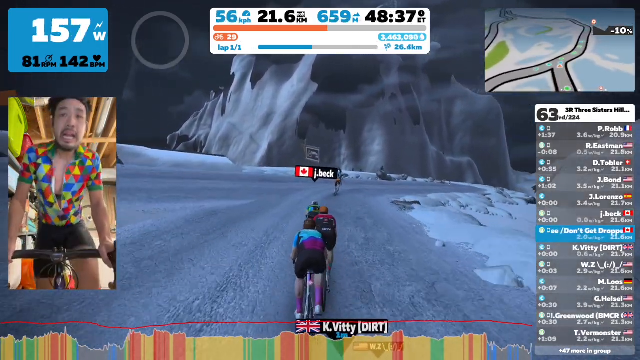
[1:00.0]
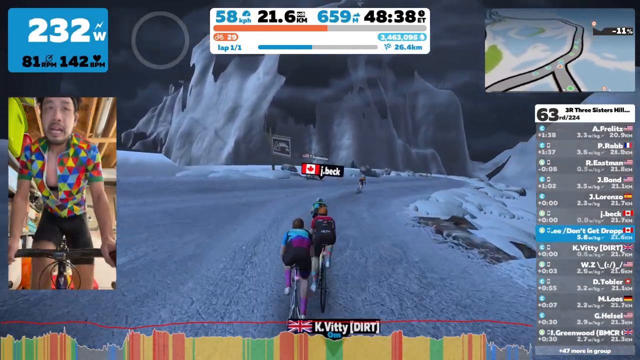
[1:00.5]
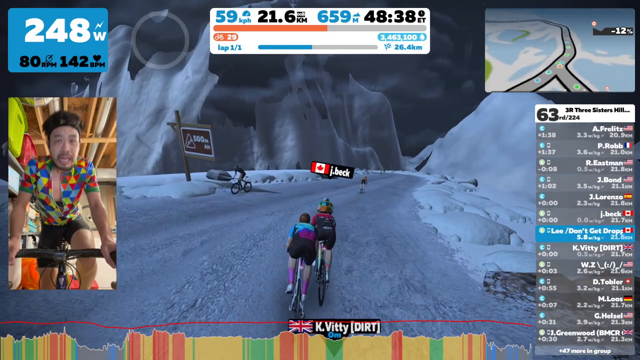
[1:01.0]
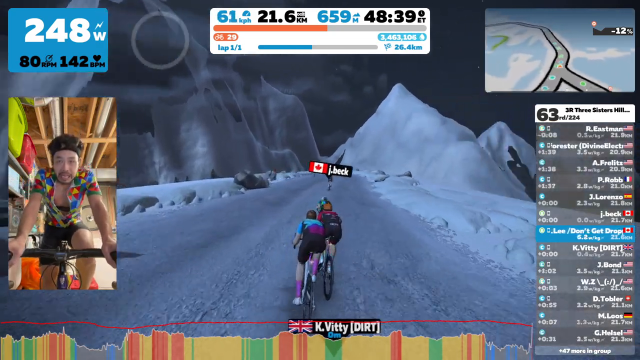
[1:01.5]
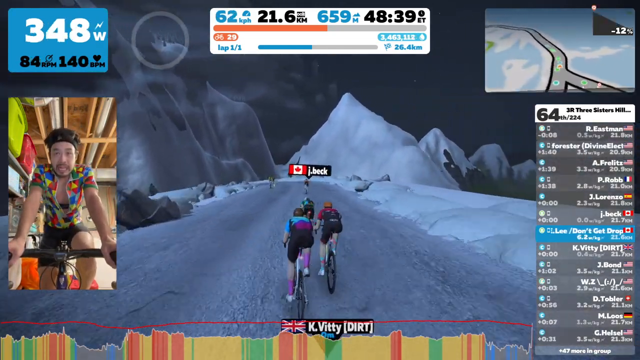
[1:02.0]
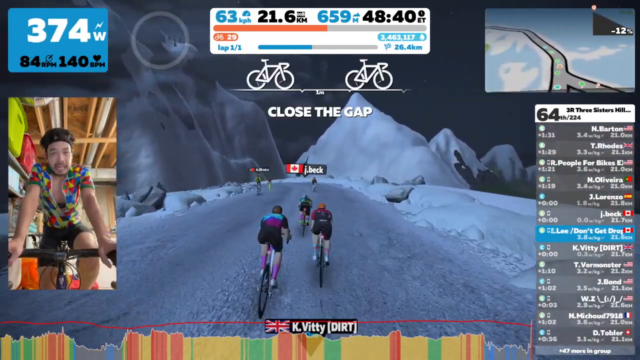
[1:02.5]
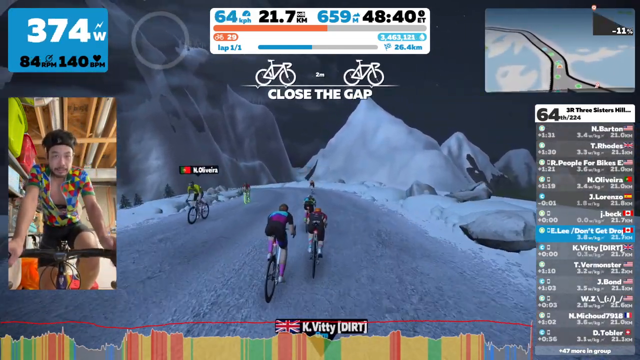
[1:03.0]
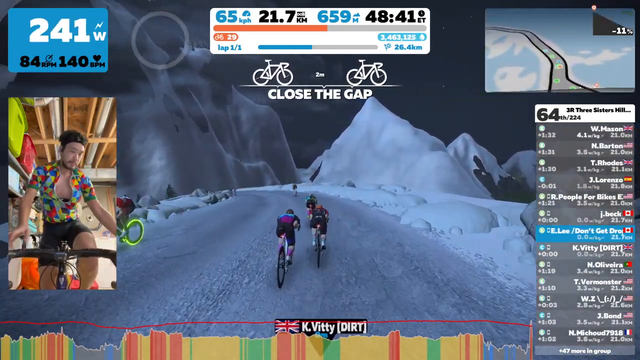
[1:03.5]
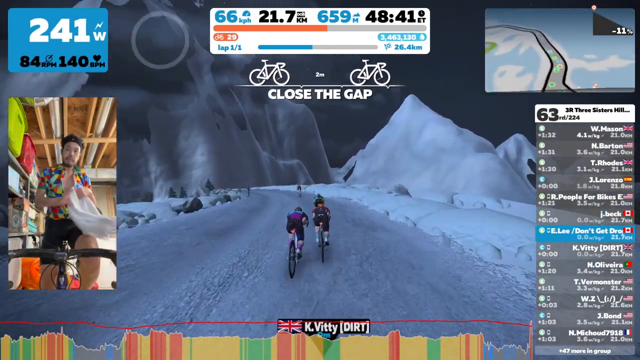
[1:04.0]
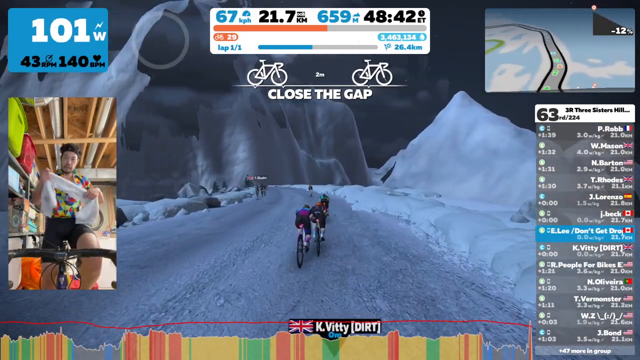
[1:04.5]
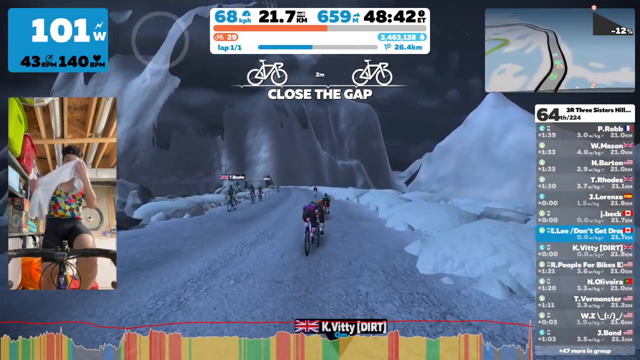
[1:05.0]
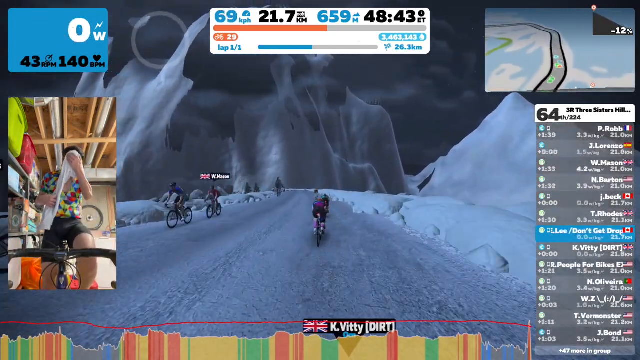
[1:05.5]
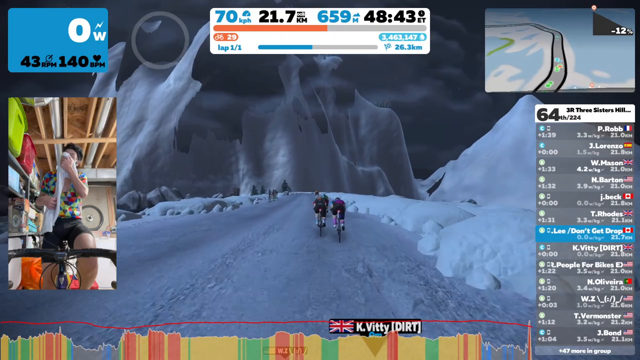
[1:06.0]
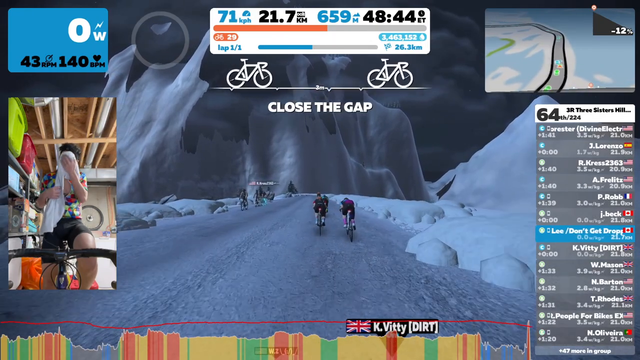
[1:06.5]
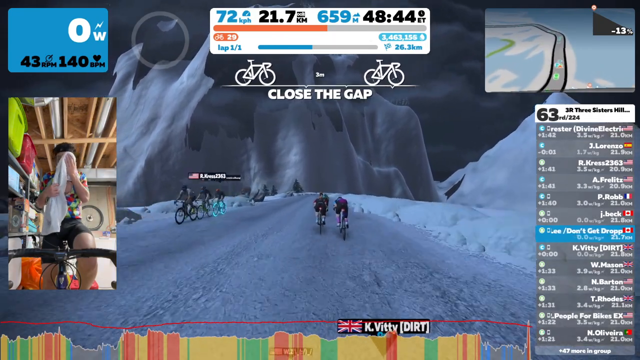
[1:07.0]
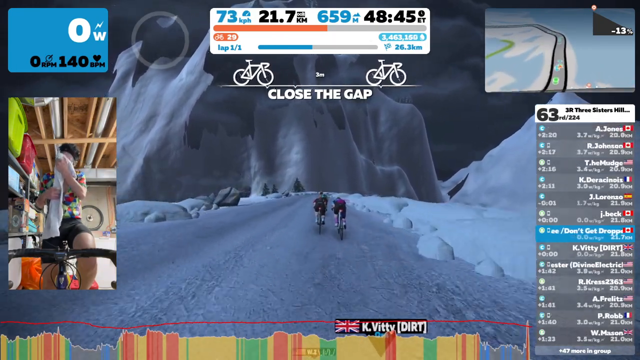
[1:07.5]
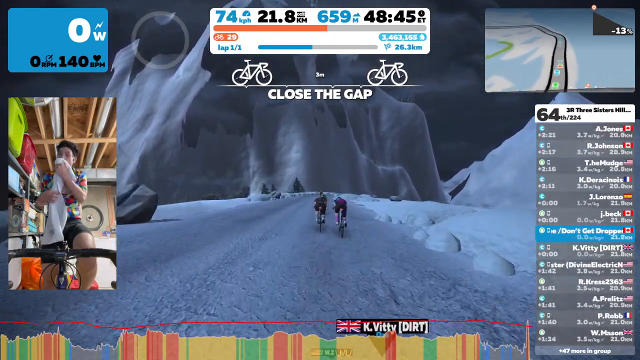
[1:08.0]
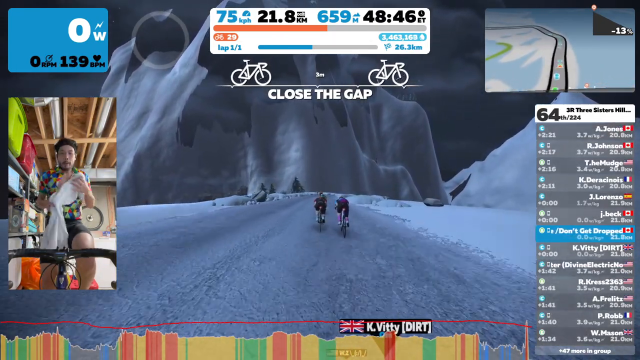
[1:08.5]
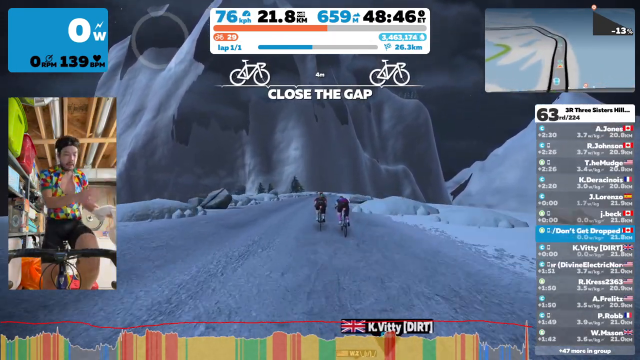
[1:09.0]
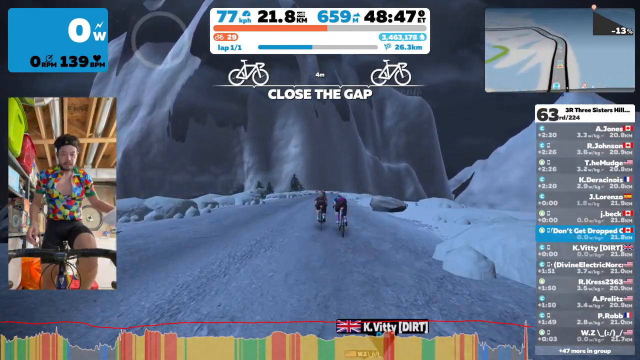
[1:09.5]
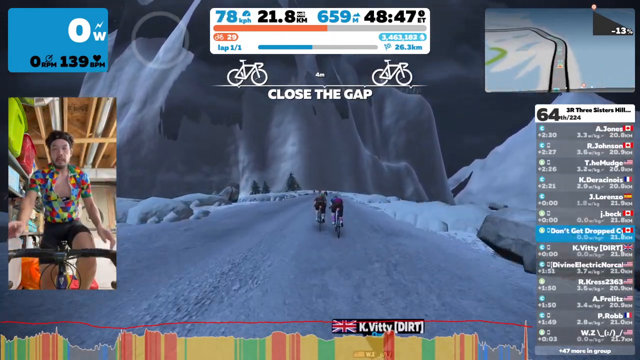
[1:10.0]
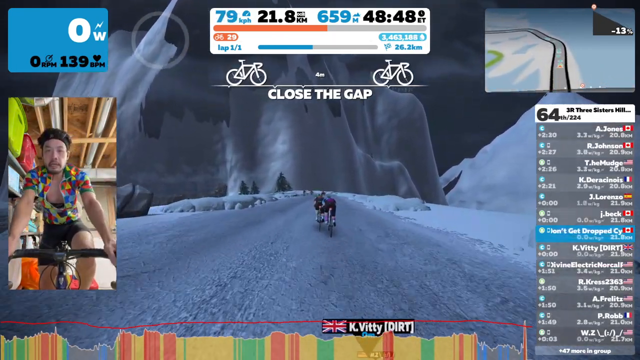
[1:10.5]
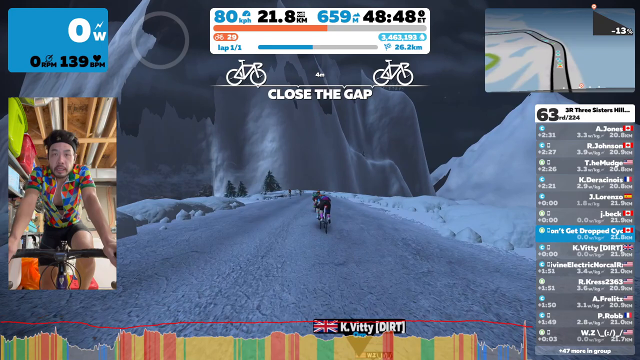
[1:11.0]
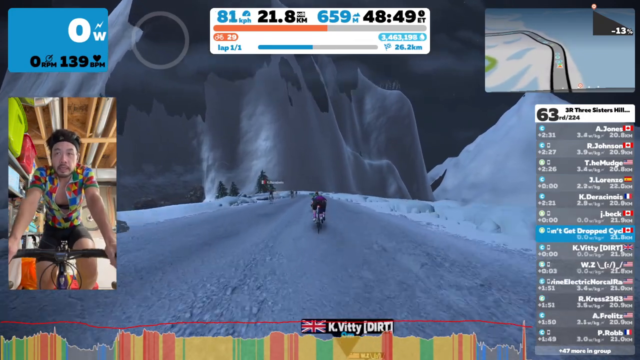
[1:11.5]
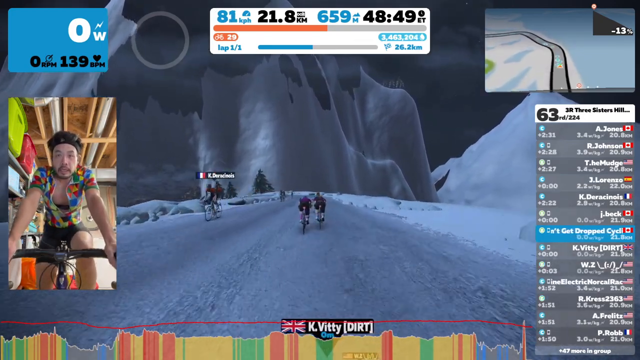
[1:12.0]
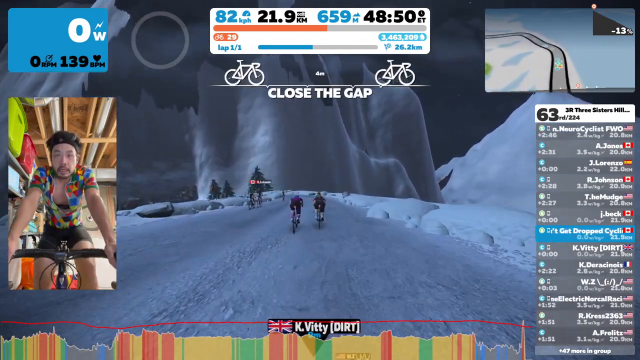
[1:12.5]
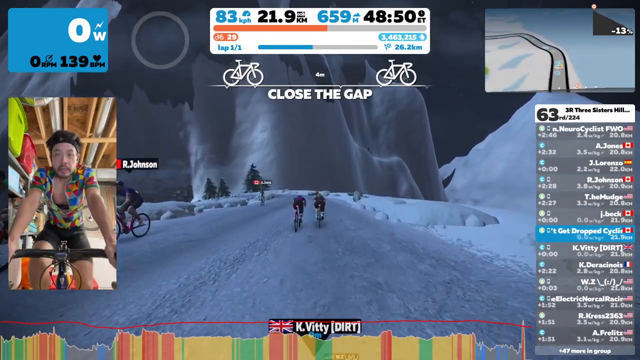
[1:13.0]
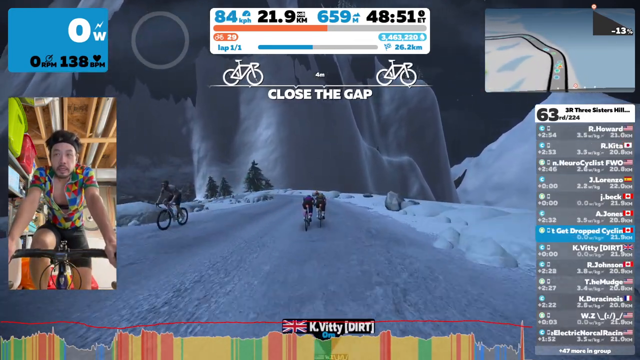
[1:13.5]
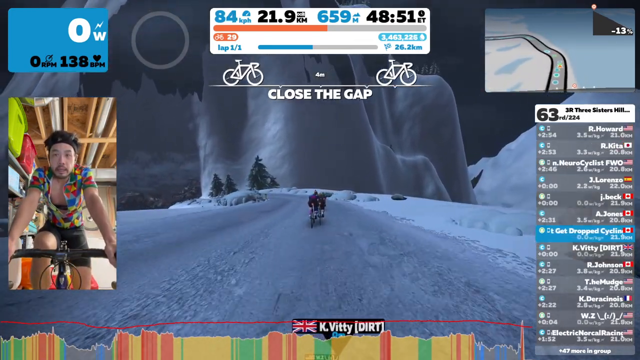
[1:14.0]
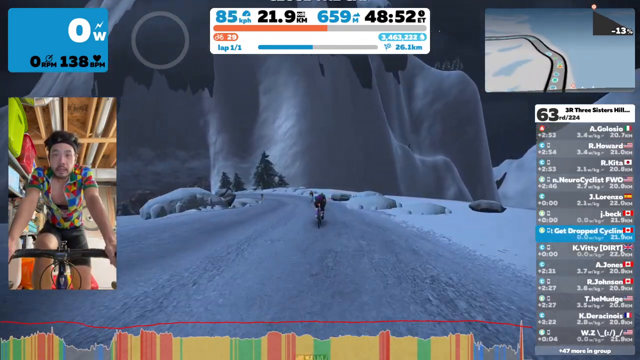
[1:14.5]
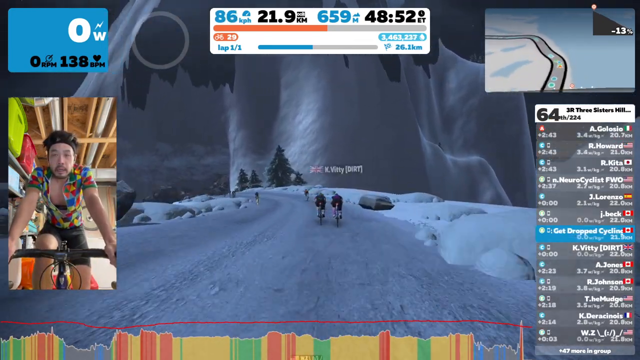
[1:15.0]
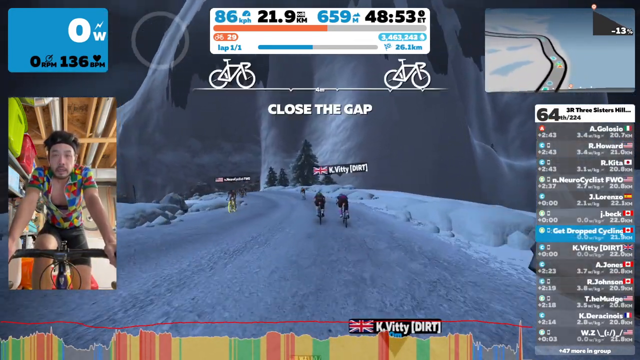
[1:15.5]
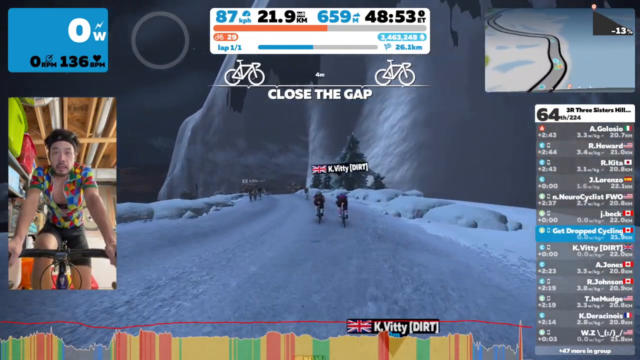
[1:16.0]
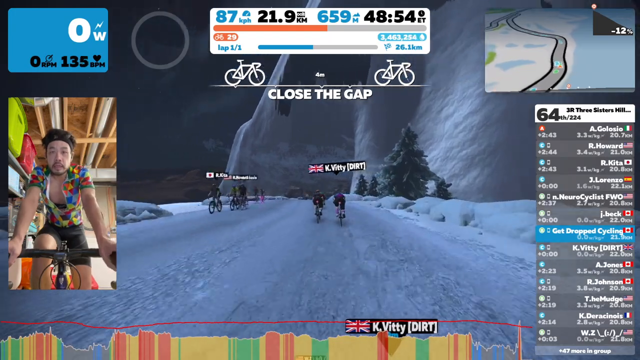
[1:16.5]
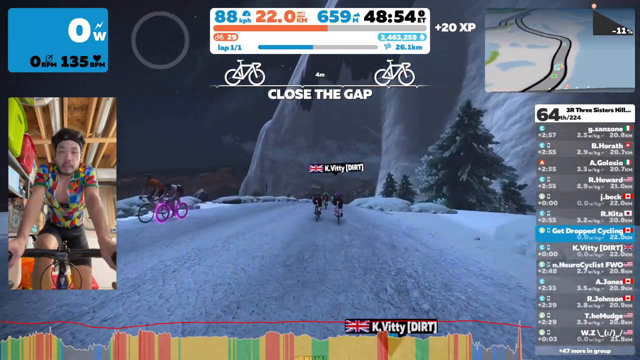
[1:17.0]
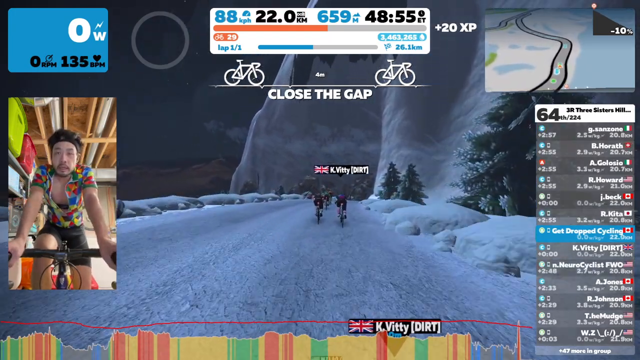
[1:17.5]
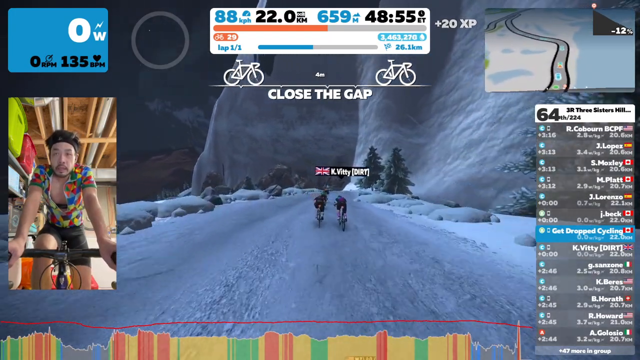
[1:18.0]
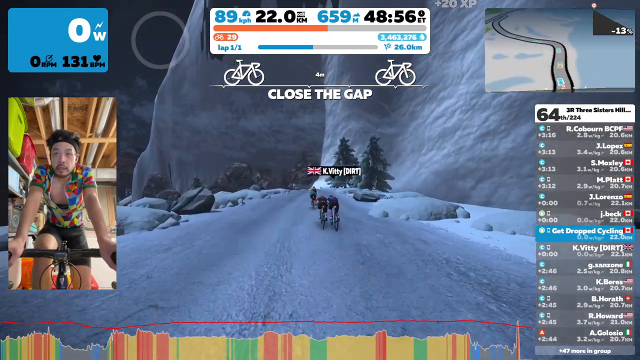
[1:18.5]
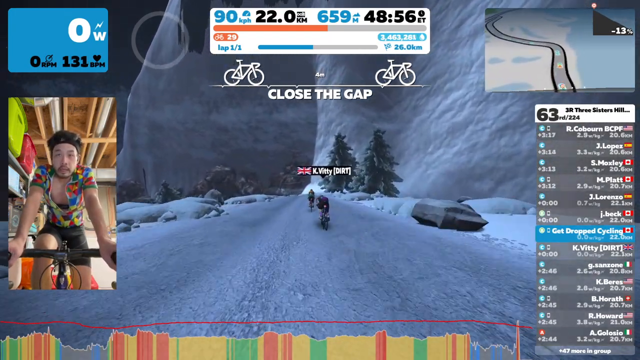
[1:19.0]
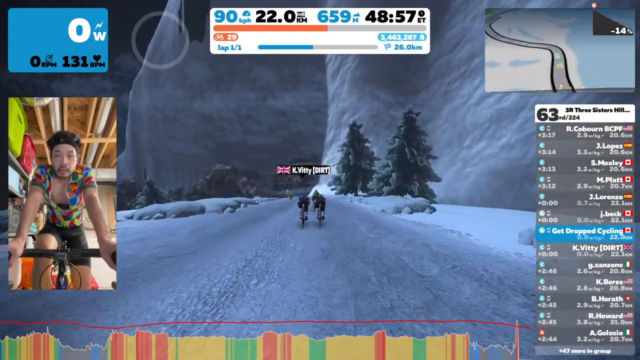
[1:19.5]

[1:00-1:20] Someone named Jay Beck, with a Canadian flag logo, has already passed the player in the game. The map shows a fairly curved road, and other players continue to pass. The player stops pedaling for a moment, grabs the white towel and wipes his face. He starts pedaling again slowly, putting both hands back on the black handlebars. Going down a hill, he does not need to pedal and carefully watches the screen and the map. The player appears to be in 6th place; the names and their places are shown in the bottom right corner.